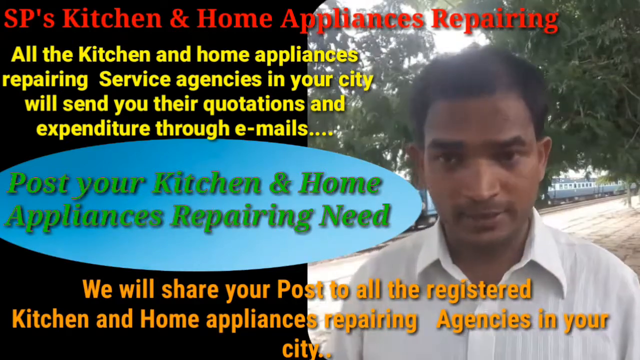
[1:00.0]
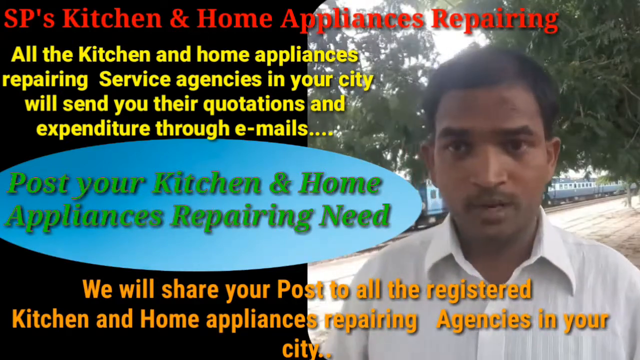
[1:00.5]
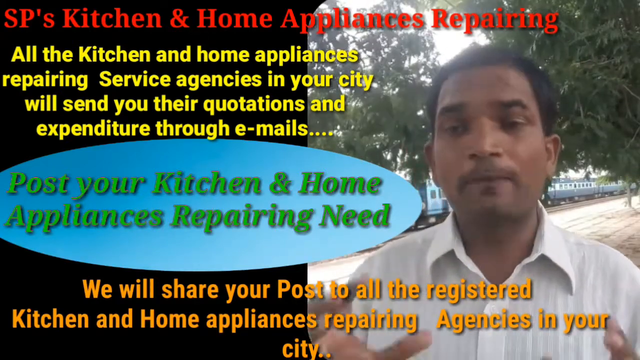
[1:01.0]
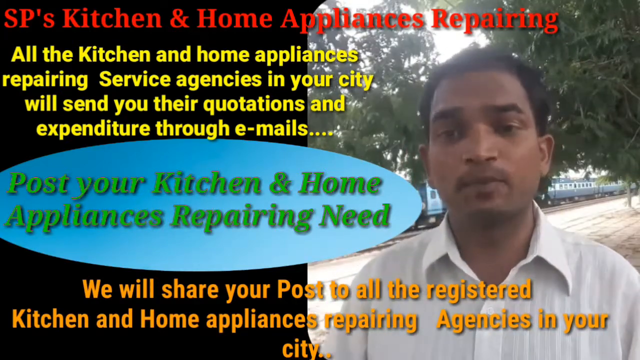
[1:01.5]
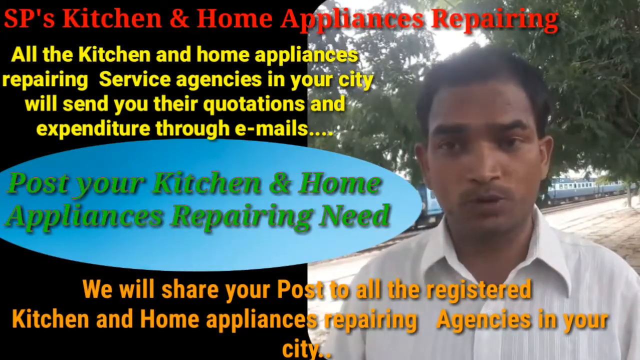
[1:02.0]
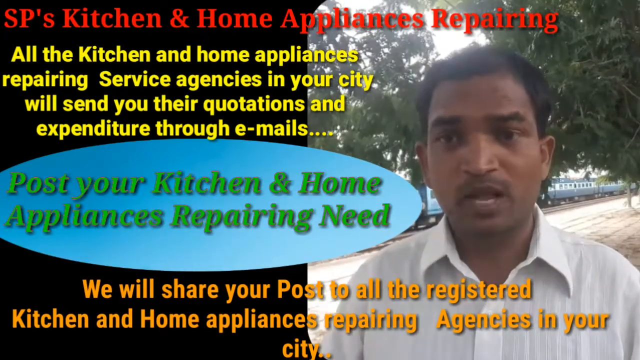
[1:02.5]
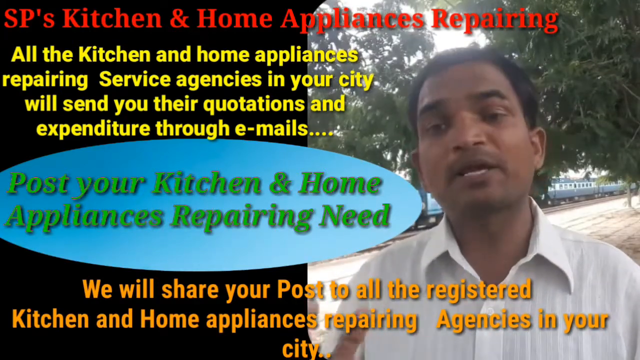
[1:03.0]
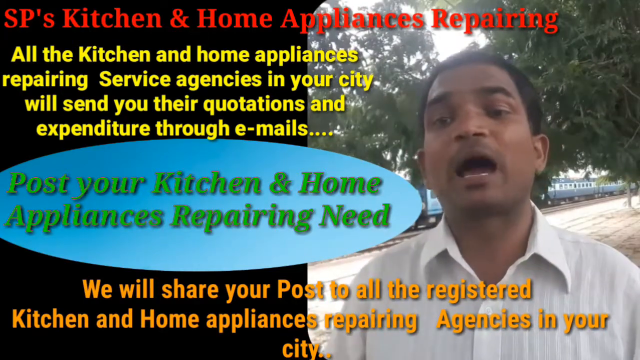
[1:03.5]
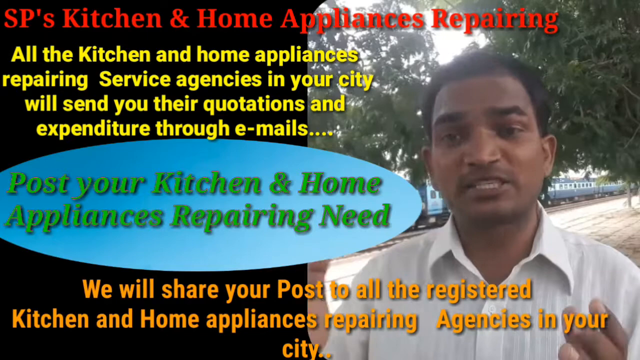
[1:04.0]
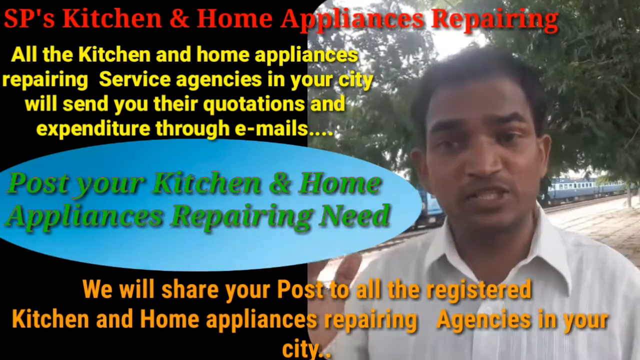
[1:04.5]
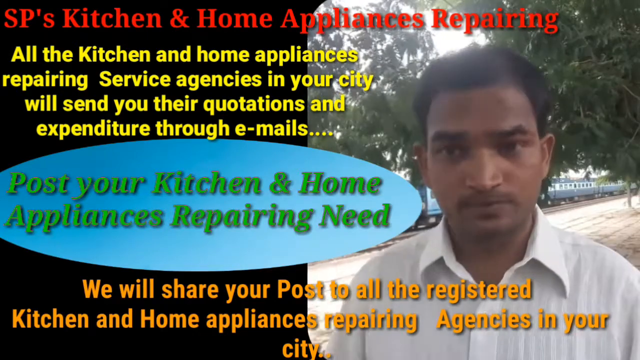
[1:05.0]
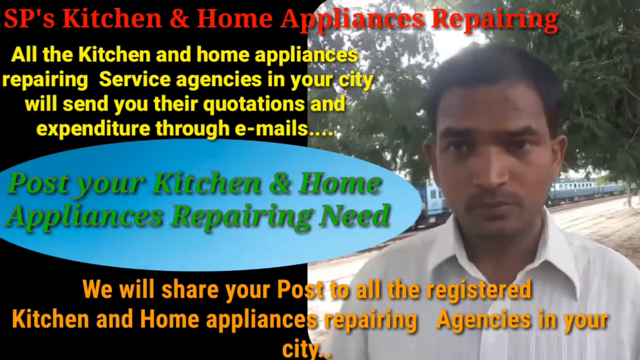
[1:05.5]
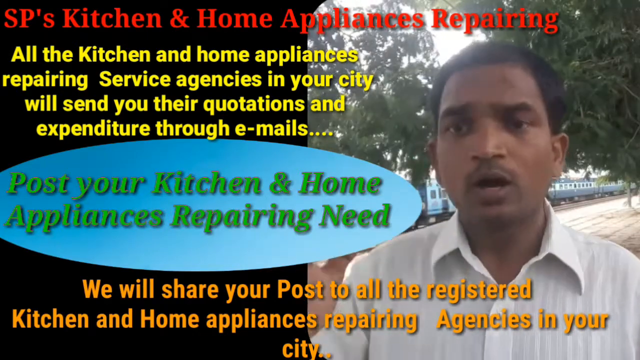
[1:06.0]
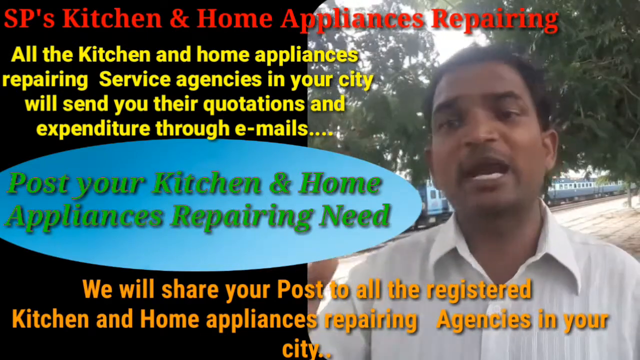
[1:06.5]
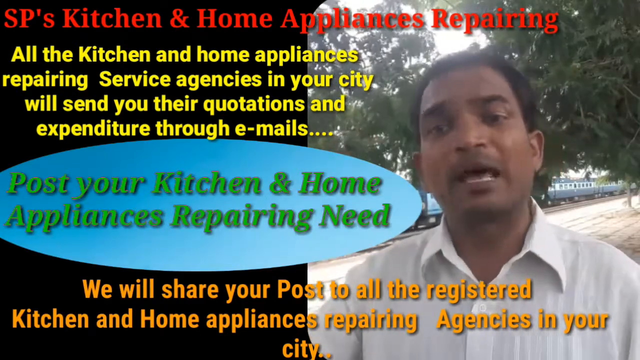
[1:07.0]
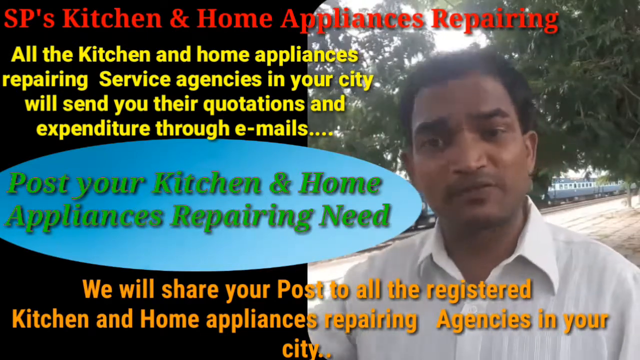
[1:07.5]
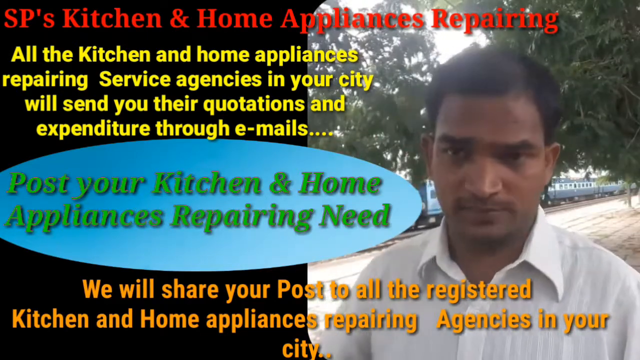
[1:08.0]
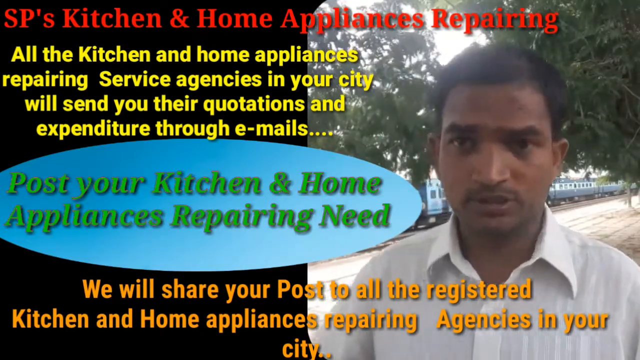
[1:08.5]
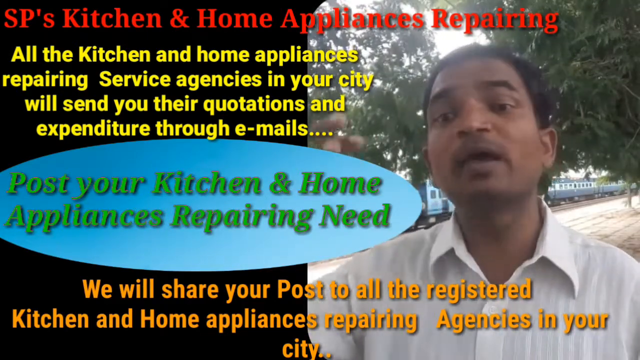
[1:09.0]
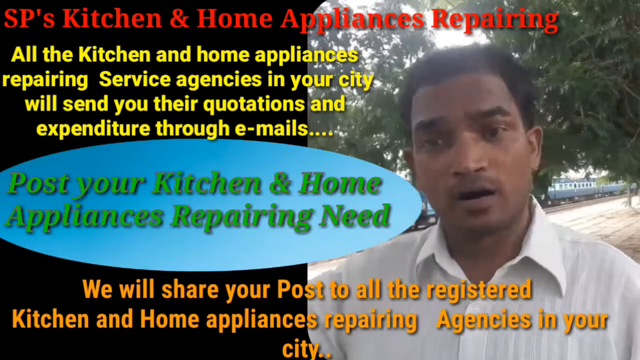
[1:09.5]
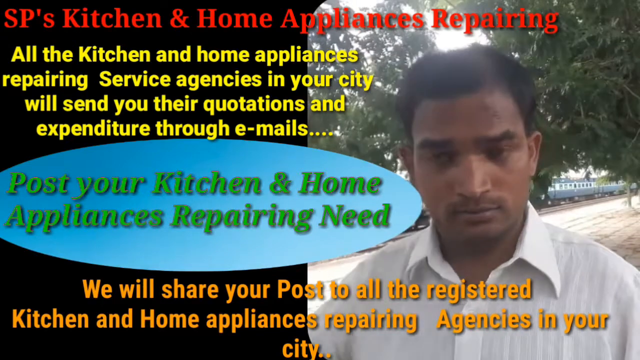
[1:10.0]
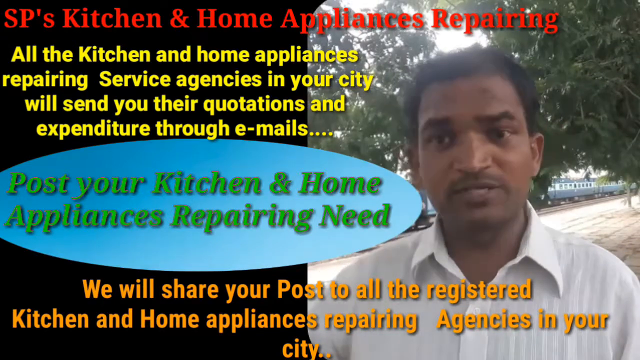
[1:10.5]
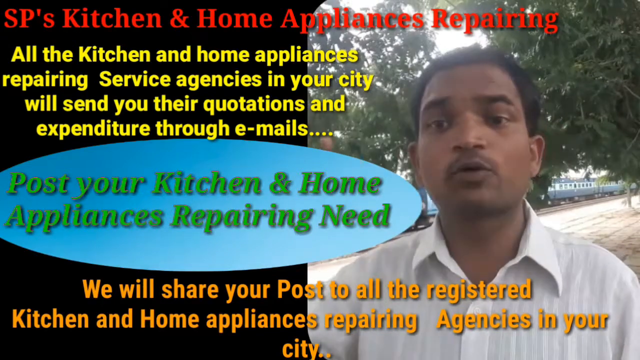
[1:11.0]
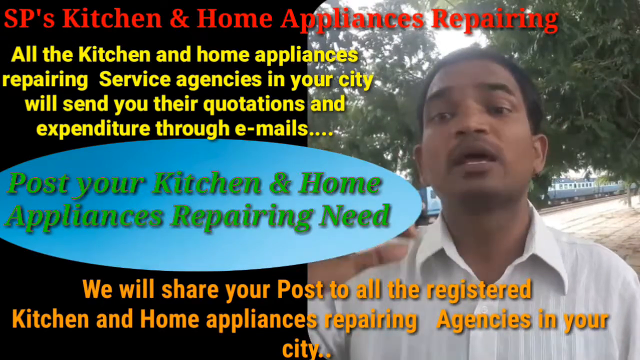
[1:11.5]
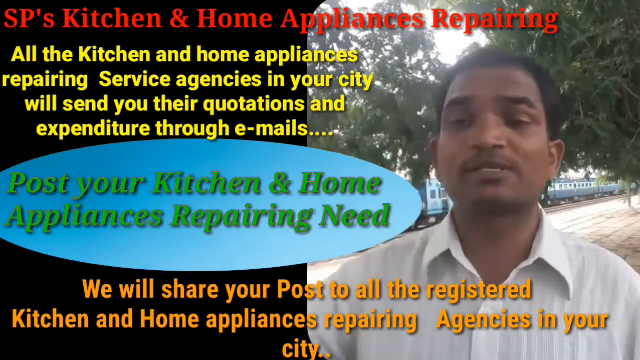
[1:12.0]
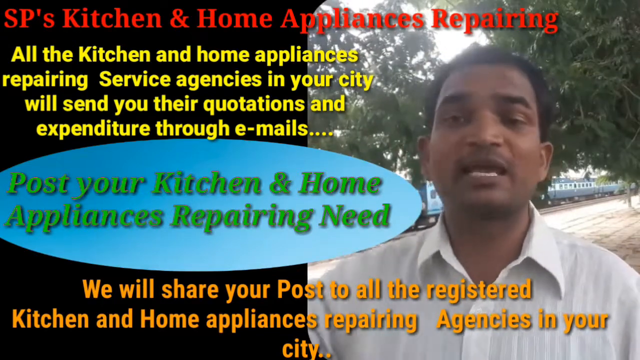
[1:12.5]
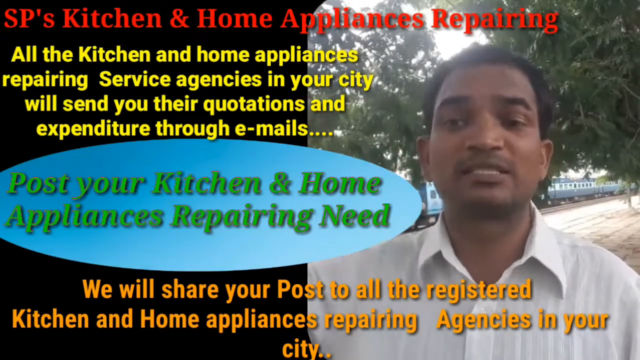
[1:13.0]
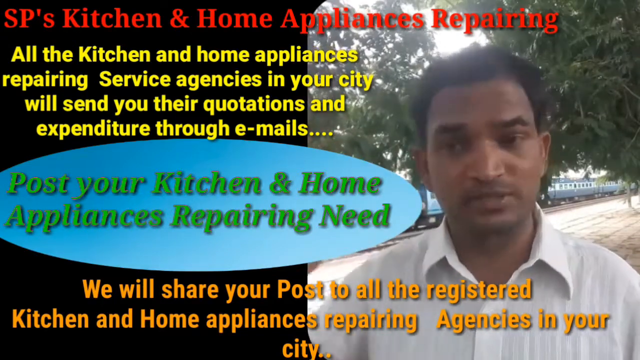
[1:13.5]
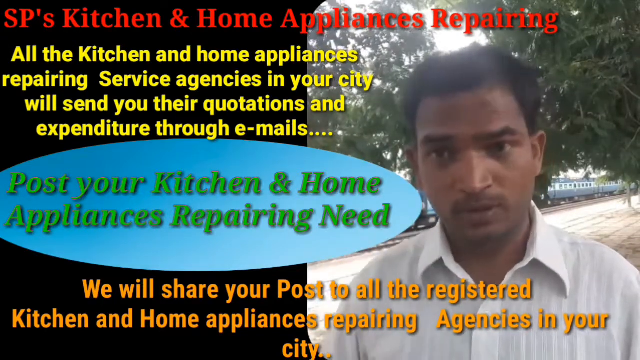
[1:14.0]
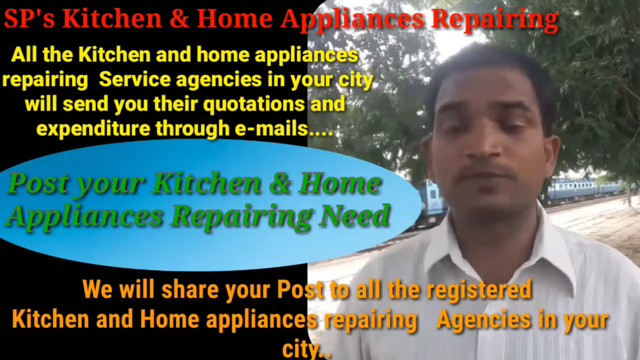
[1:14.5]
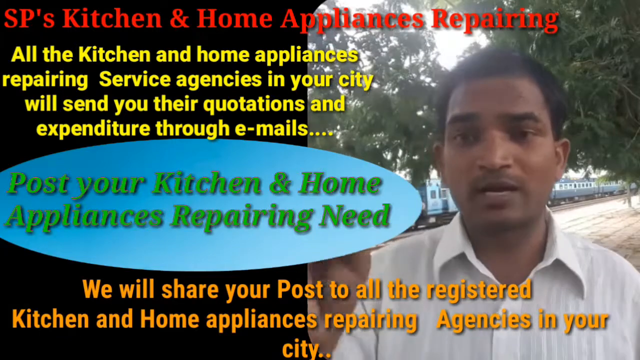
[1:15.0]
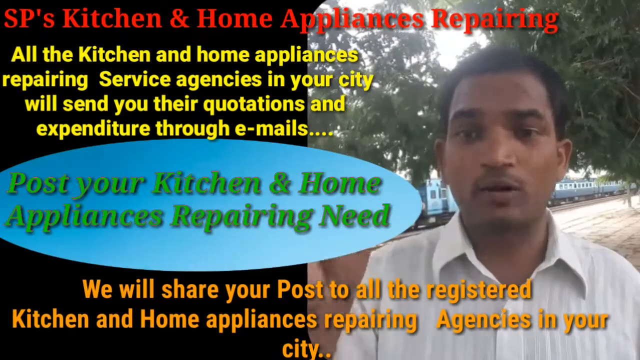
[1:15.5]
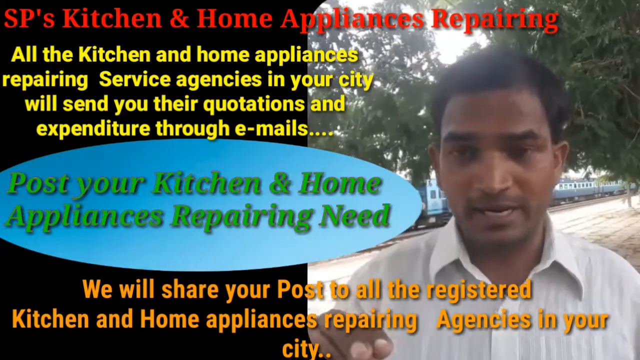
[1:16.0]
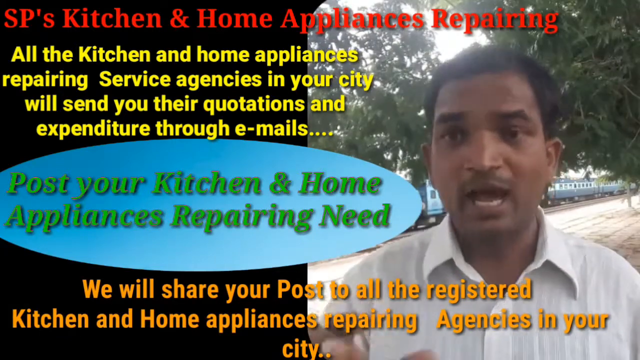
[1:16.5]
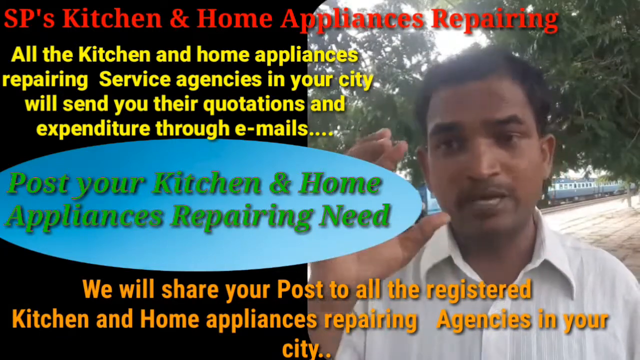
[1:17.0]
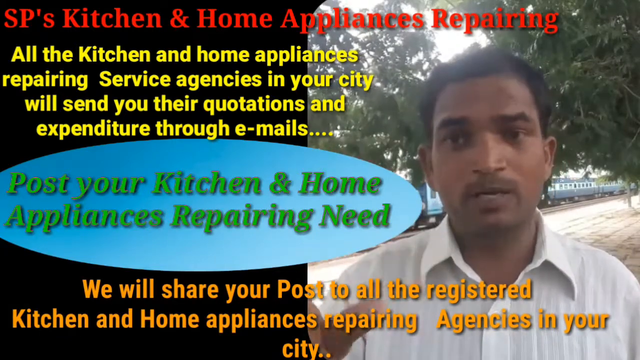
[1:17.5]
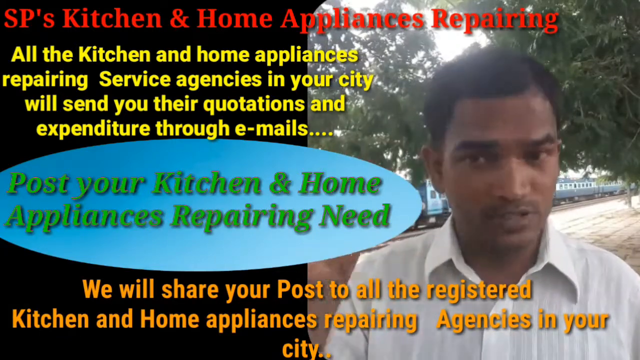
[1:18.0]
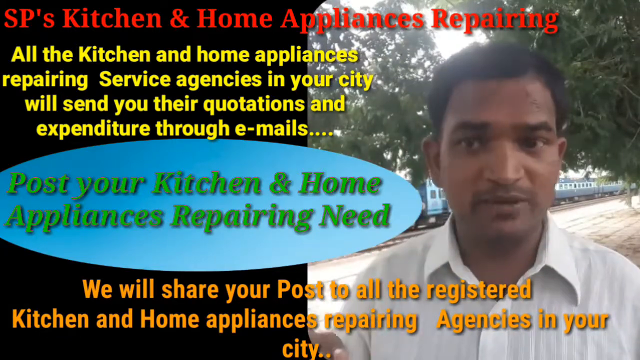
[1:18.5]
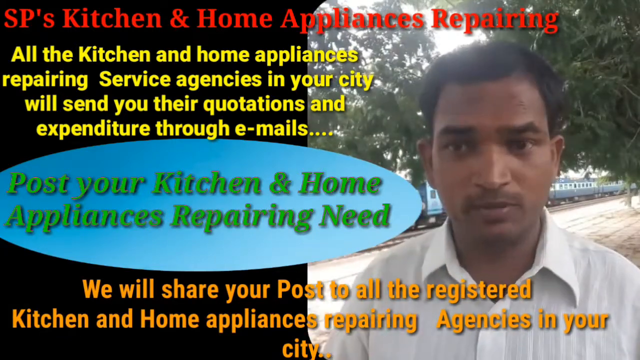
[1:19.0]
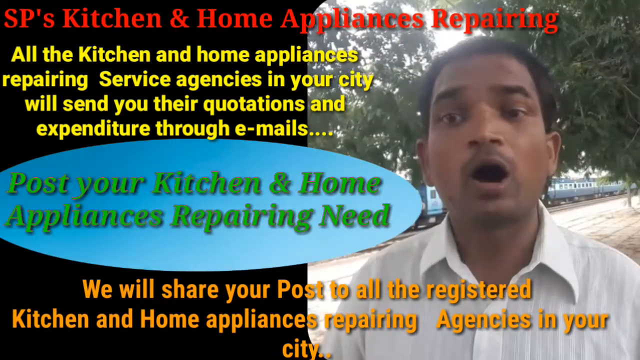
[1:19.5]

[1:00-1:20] A man seems to be standing outside, with trees and foliage behind him. To his left, on a black background, are words in different fonts. First, in red: "SP's kitchen and home appliances repairing." Then, in yellow: "all the kitchen and home appliances repairing service agencies in your city will send you their quotations and expenditure through emails..." In a blue text bubble with green font: "post your kitchen and home appliances repairing need." Below that, in orange: "we will share your post to all registered kitchen and home appliances repairing agencies in your area." The view stays on this slide without moving.